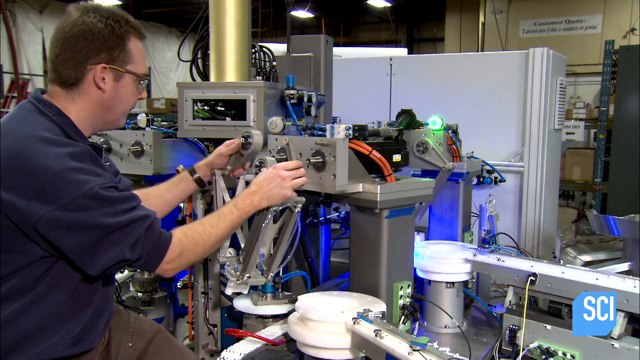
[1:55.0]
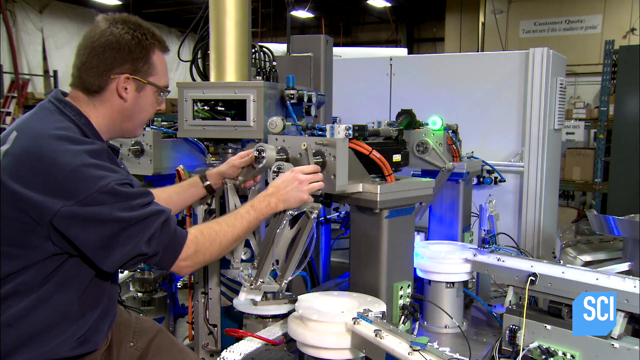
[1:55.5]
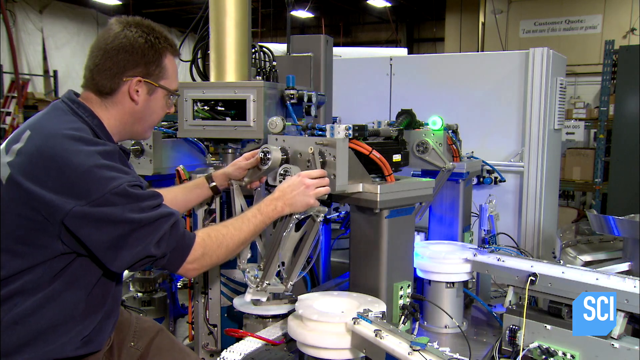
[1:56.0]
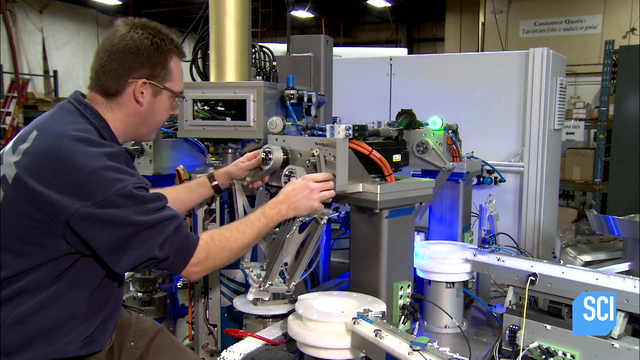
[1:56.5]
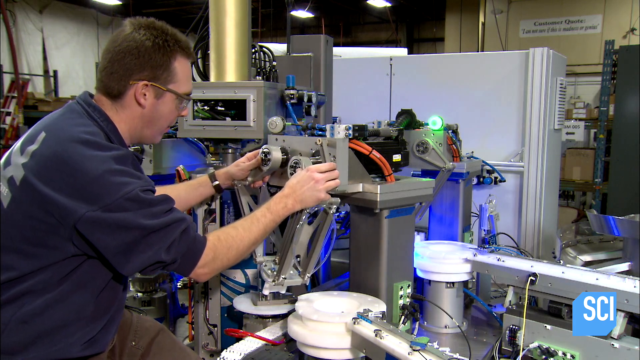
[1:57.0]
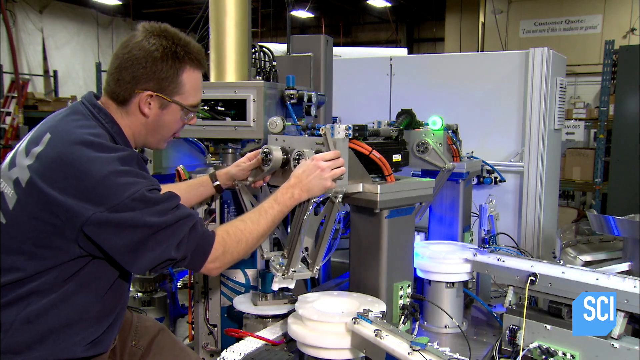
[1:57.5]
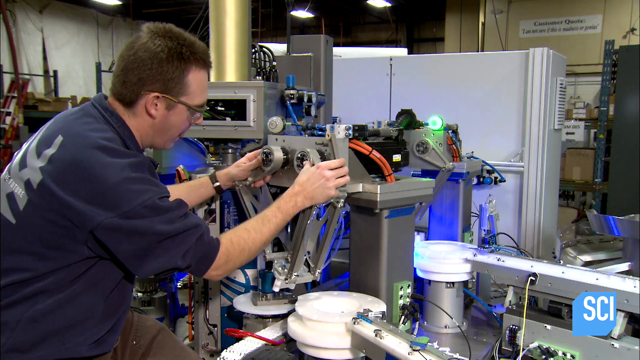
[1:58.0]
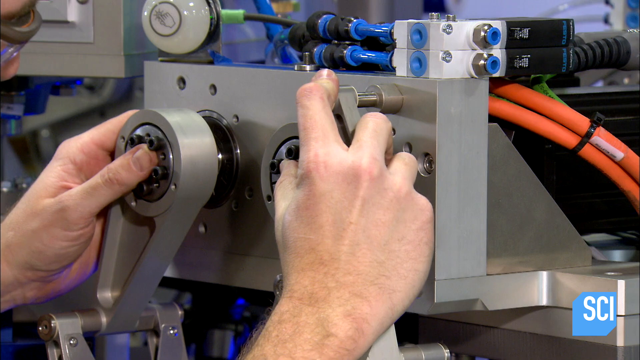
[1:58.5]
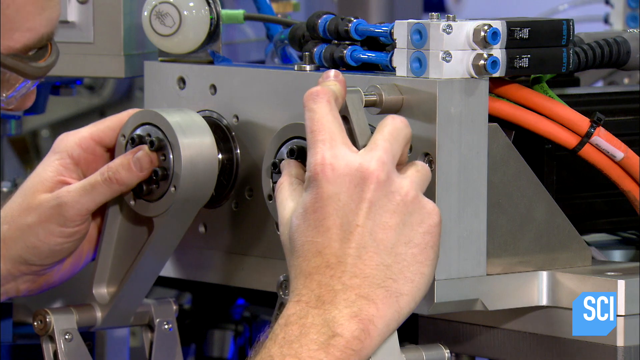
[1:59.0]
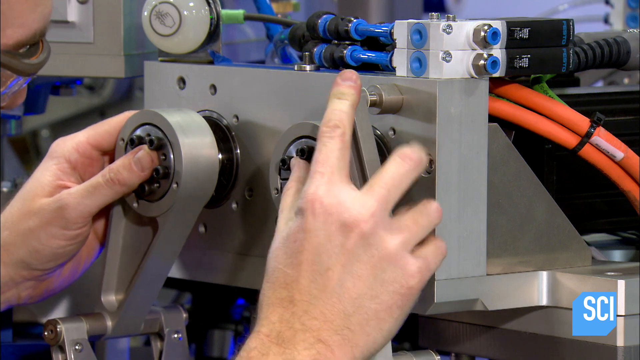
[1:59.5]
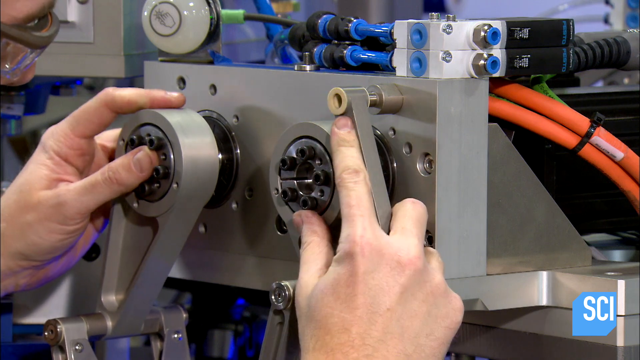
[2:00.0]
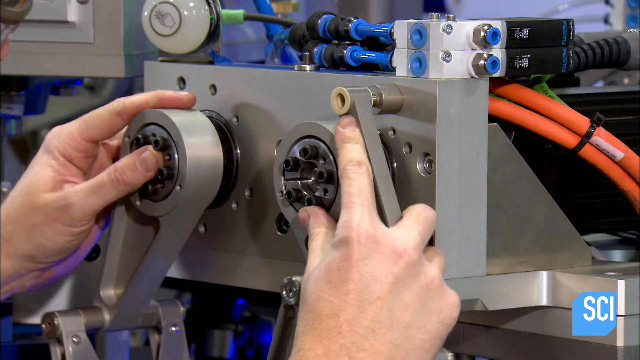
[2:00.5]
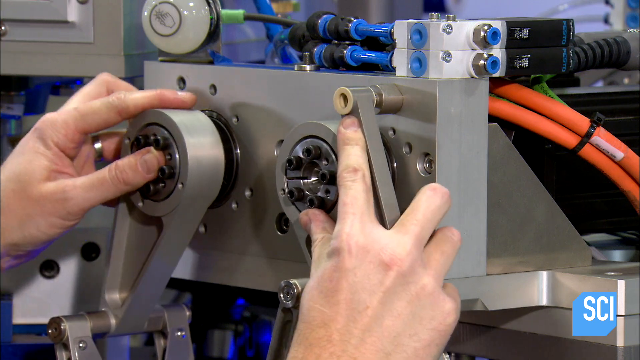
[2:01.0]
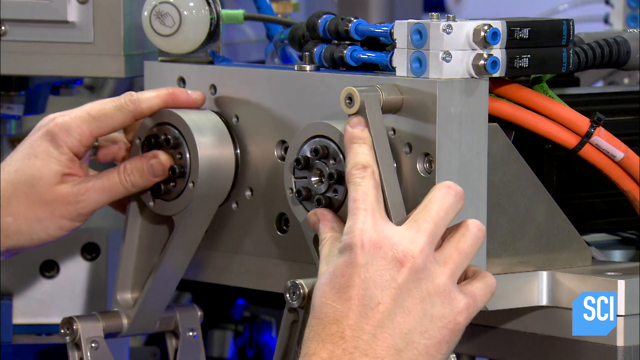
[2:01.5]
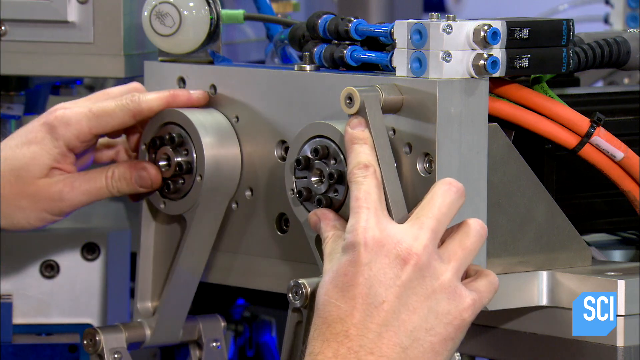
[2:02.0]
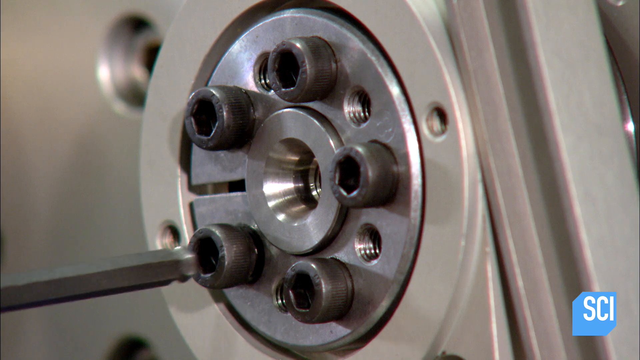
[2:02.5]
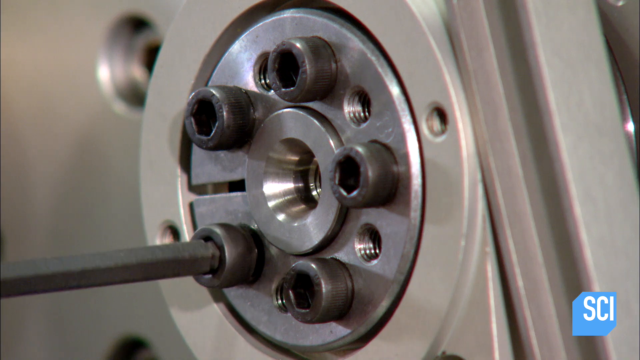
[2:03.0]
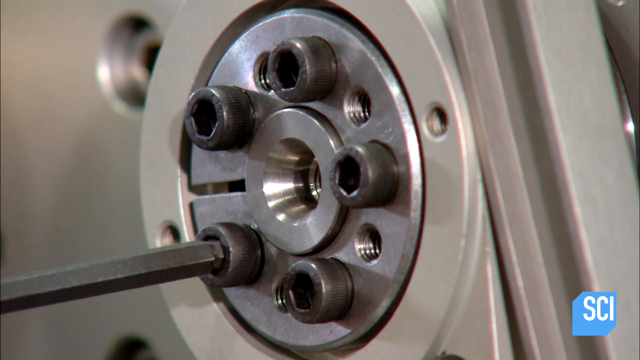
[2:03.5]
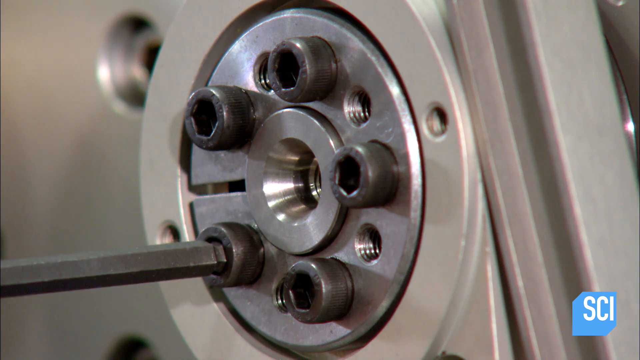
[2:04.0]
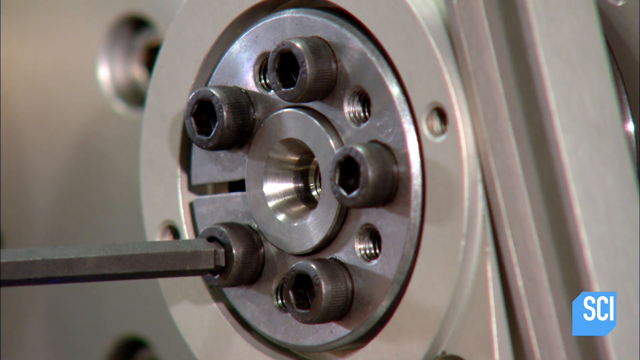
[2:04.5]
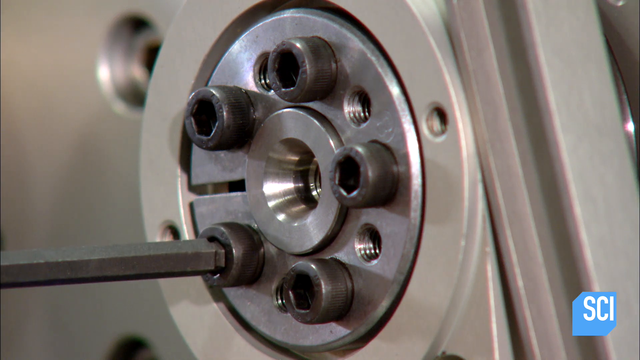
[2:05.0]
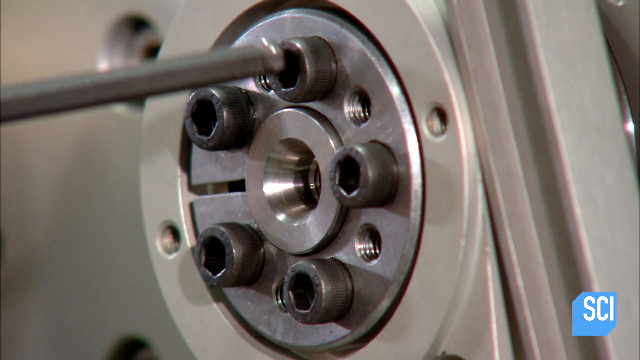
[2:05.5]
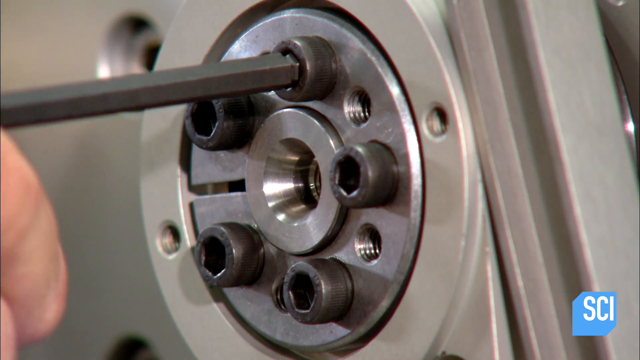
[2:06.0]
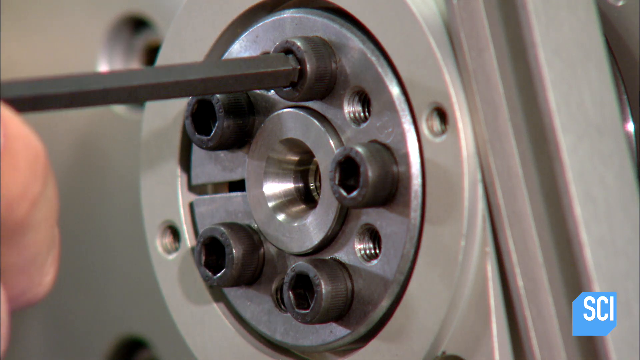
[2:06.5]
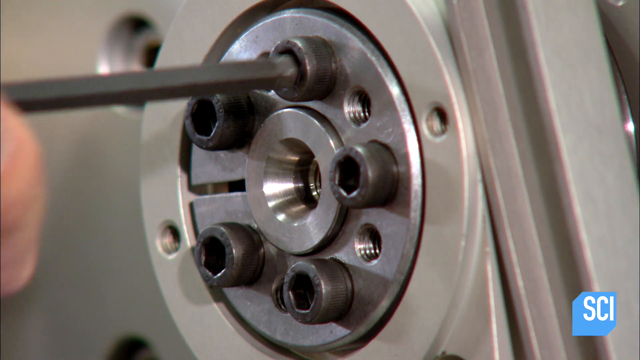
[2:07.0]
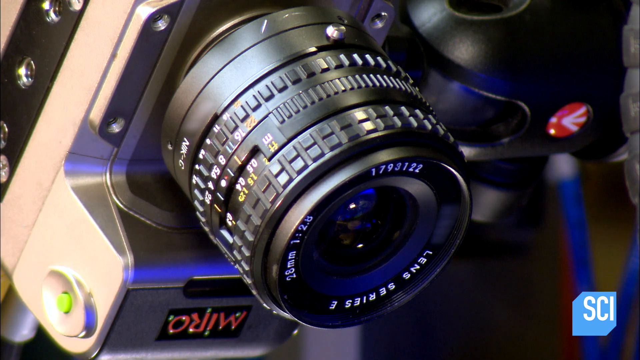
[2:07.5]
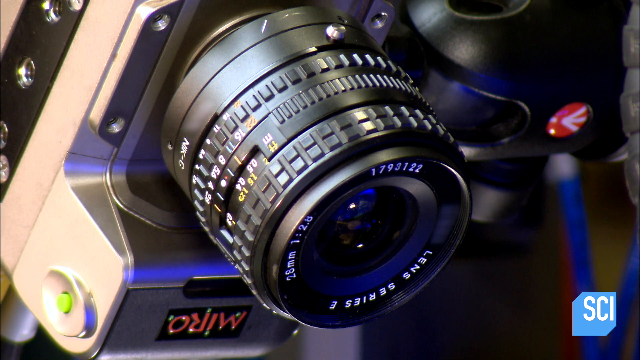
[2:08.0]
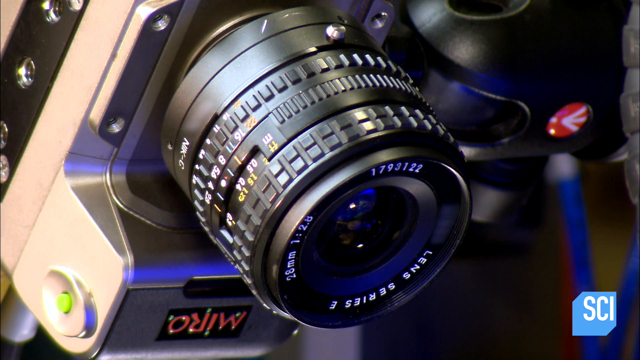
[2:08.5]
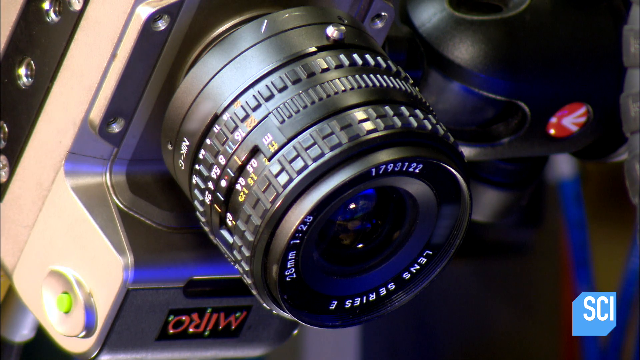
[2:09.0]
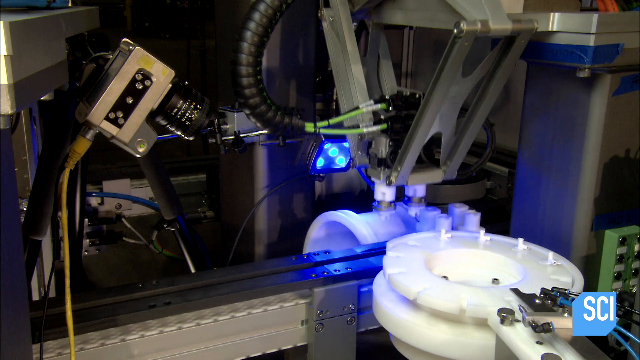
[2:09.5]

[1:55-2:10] The man in a blue shirt puts the assembled piece onto the machine, which has two places where two round things fit in. He tightens these two places with a screwdriver. The machine looks connected to some sort of computer, with large orange wires coming out of it. Something is silver and dark gray. Something that looks like a camera lens is then shown, possibly watching or measuring the piece to test it. After that, a machine touches a round plastic piece that turns. The Science logo is in the bottom right corner.